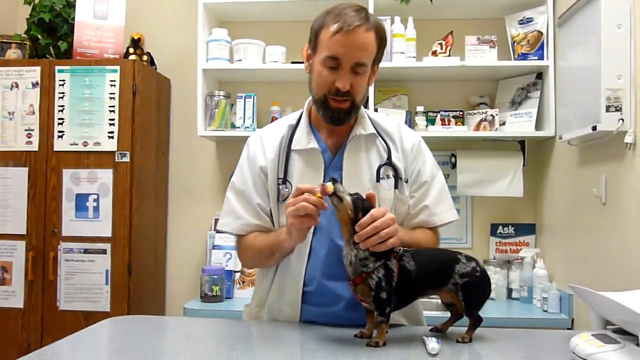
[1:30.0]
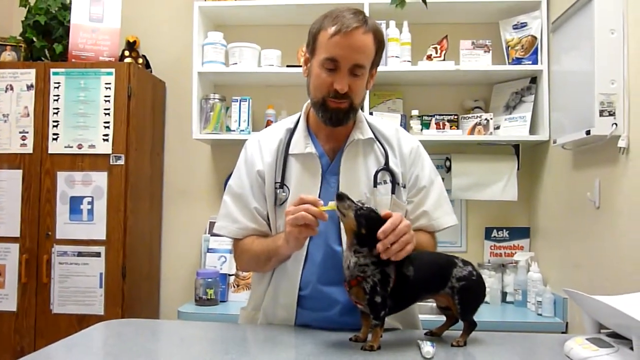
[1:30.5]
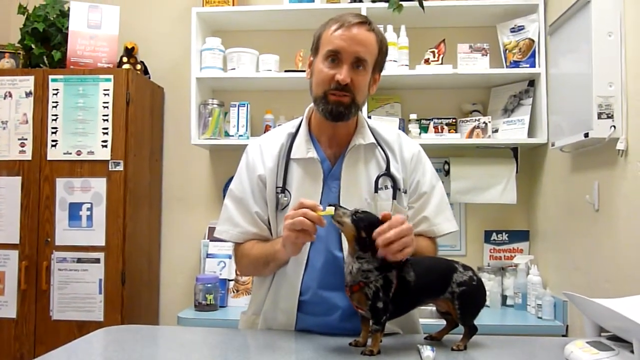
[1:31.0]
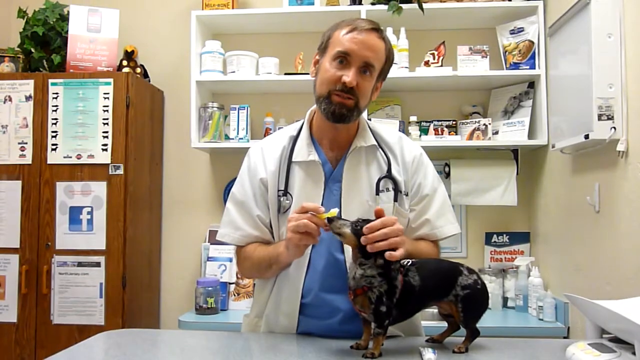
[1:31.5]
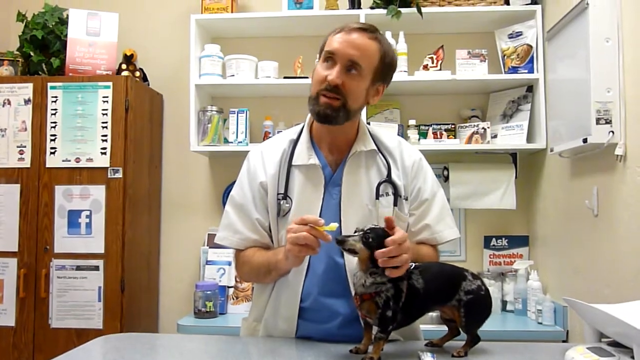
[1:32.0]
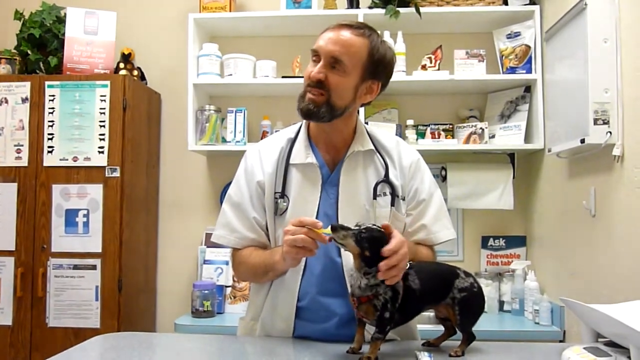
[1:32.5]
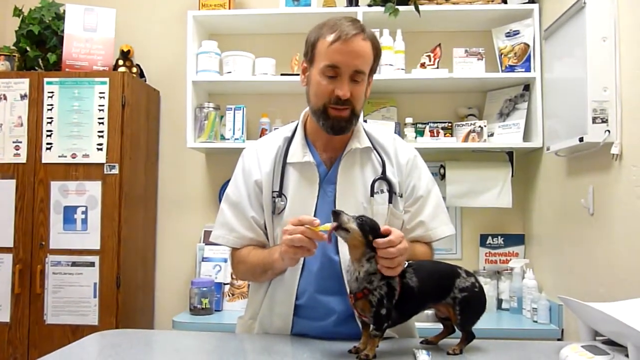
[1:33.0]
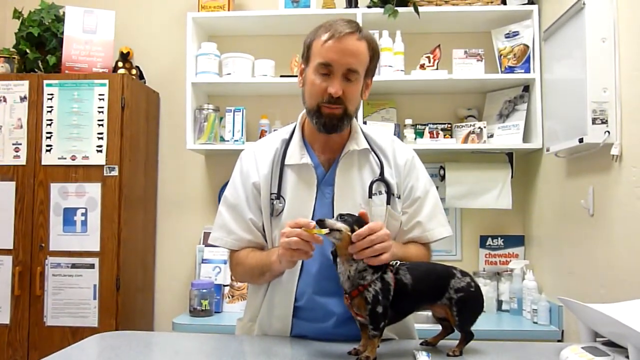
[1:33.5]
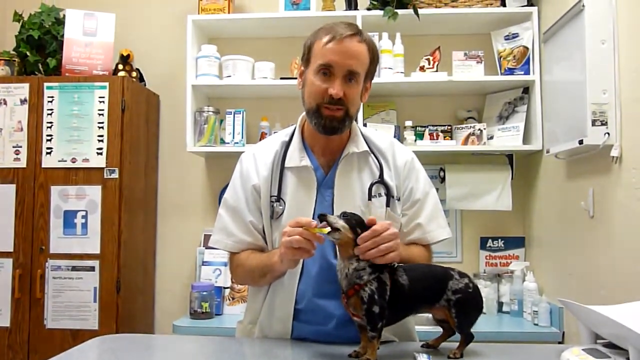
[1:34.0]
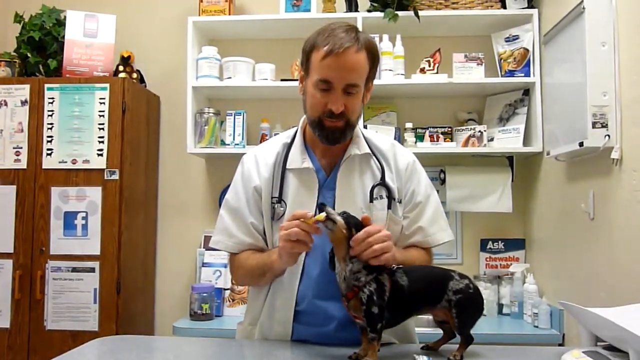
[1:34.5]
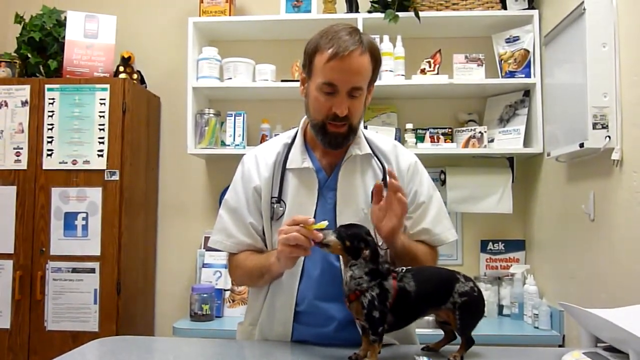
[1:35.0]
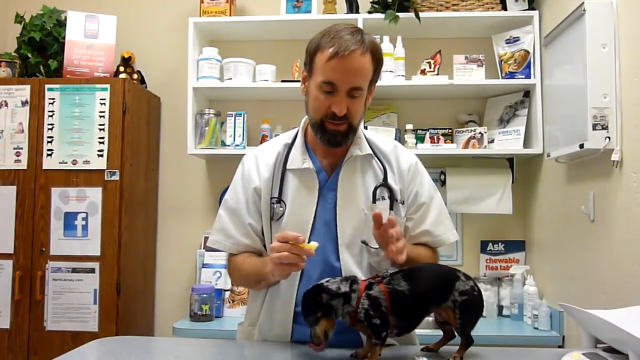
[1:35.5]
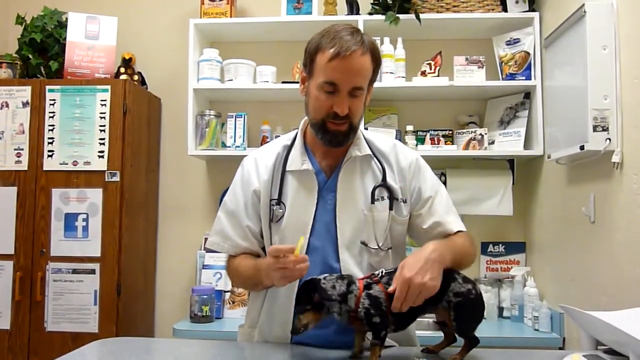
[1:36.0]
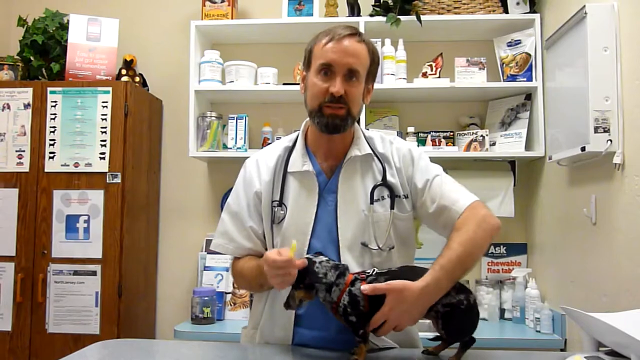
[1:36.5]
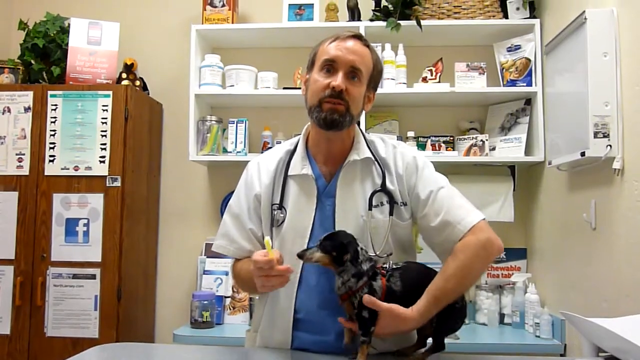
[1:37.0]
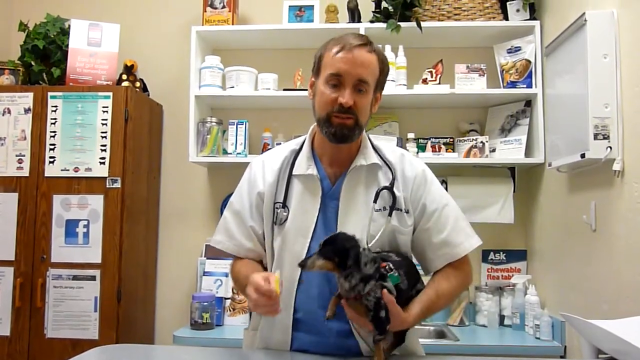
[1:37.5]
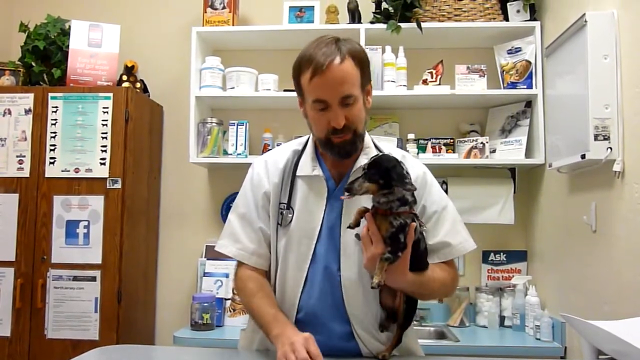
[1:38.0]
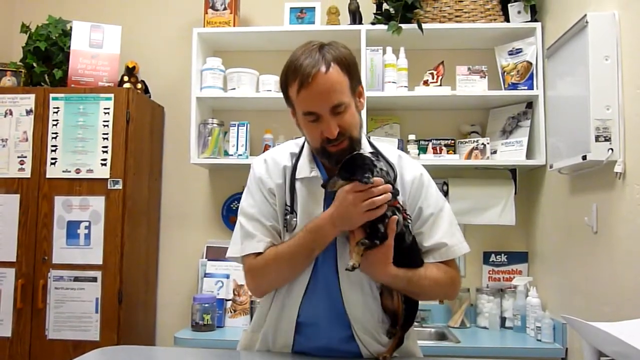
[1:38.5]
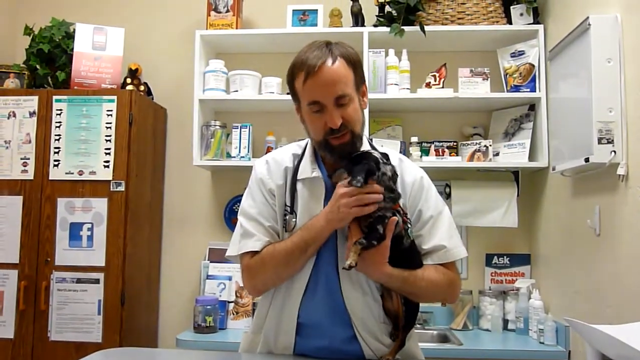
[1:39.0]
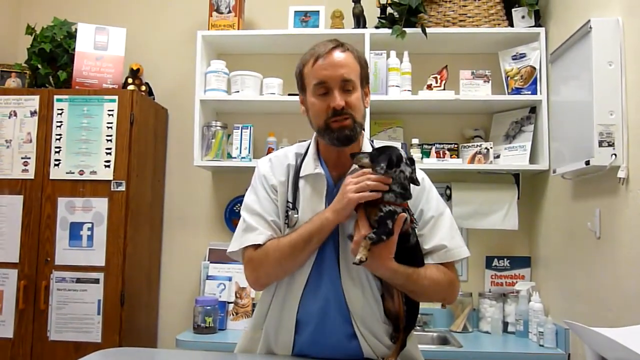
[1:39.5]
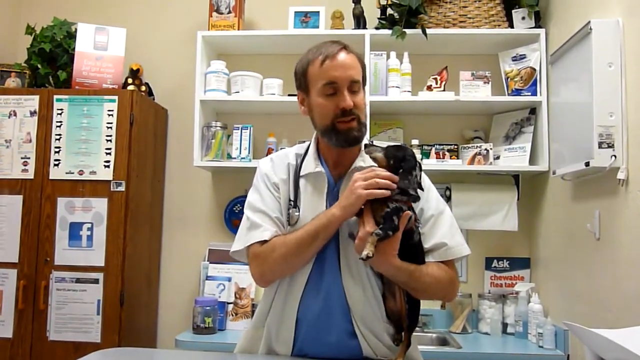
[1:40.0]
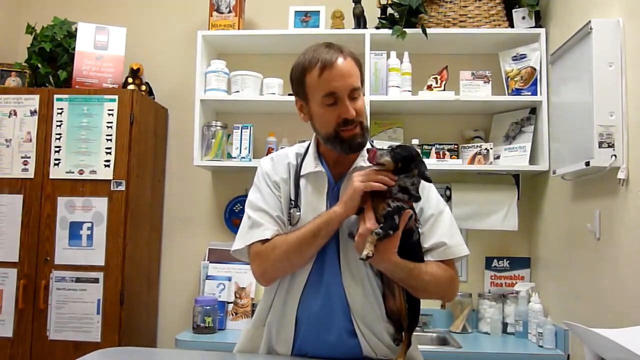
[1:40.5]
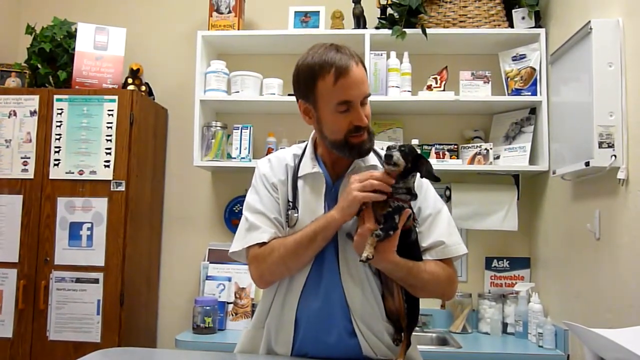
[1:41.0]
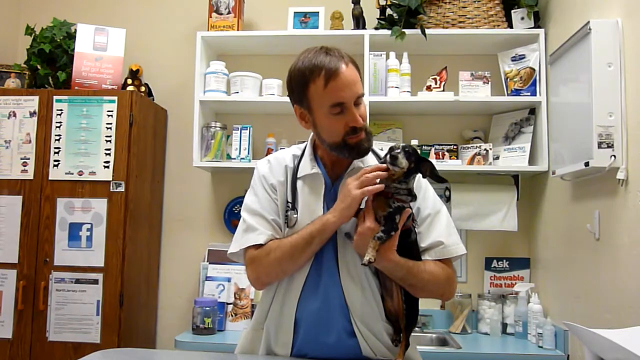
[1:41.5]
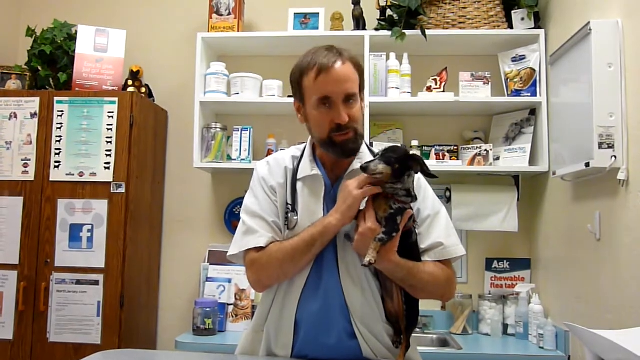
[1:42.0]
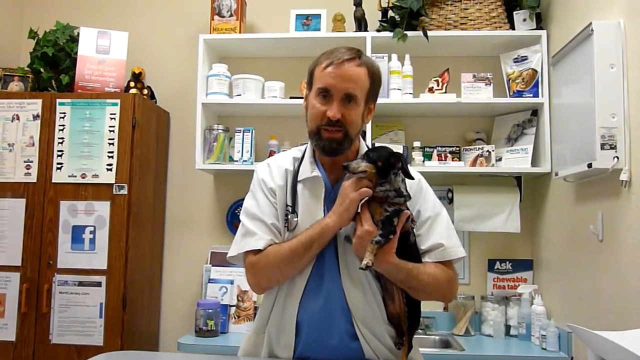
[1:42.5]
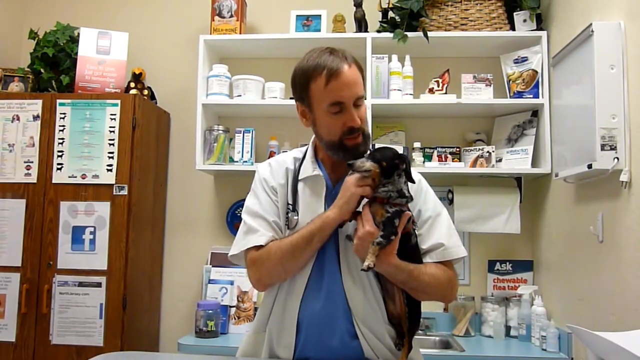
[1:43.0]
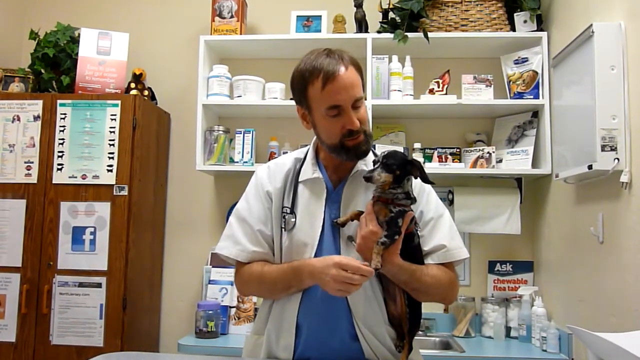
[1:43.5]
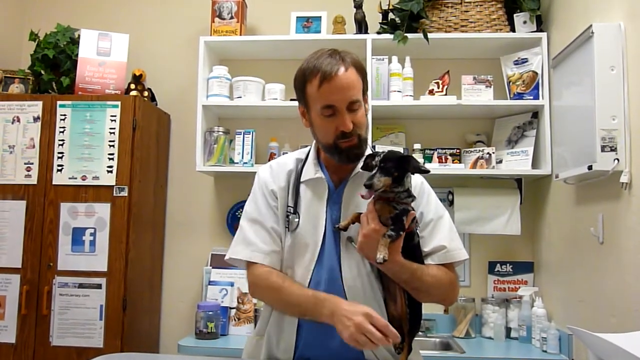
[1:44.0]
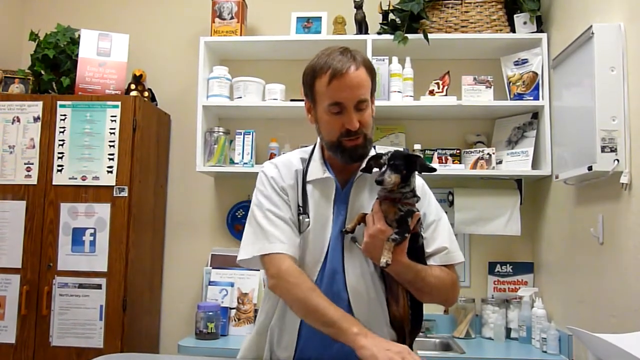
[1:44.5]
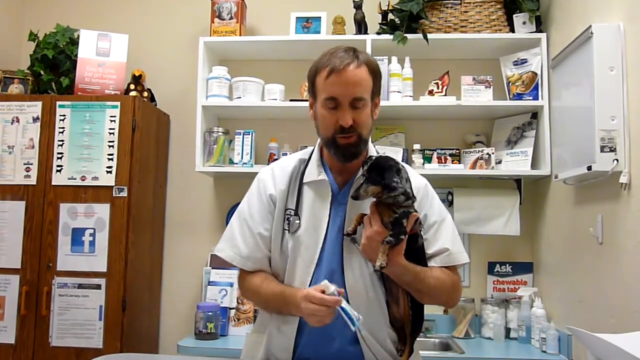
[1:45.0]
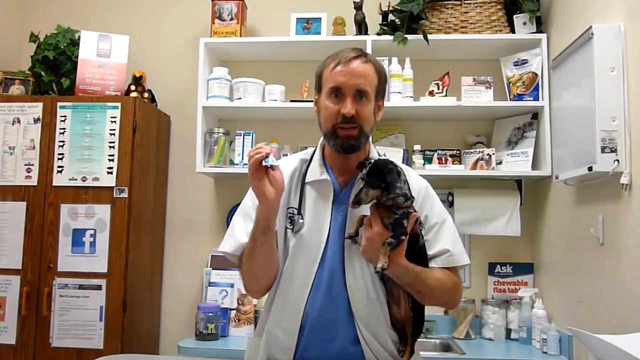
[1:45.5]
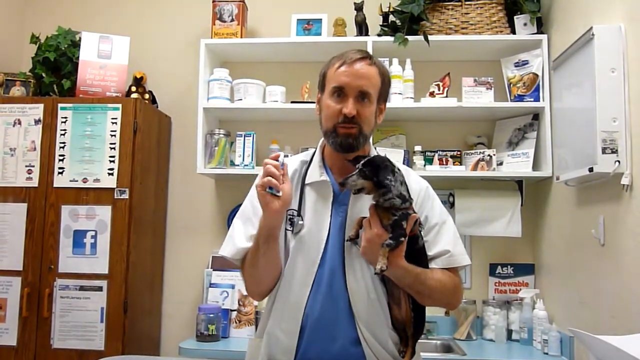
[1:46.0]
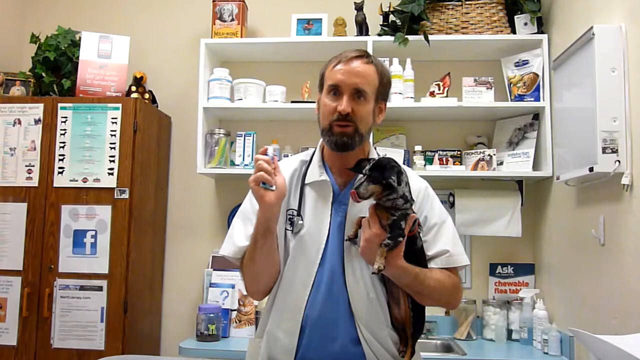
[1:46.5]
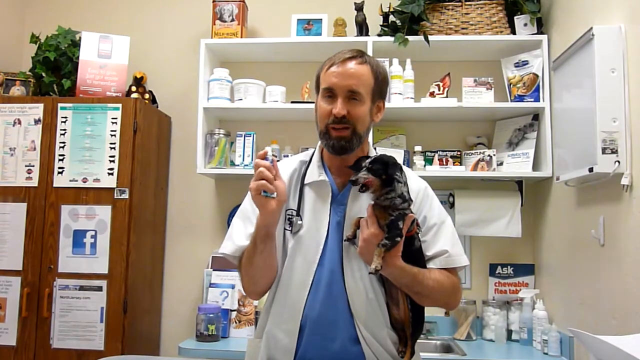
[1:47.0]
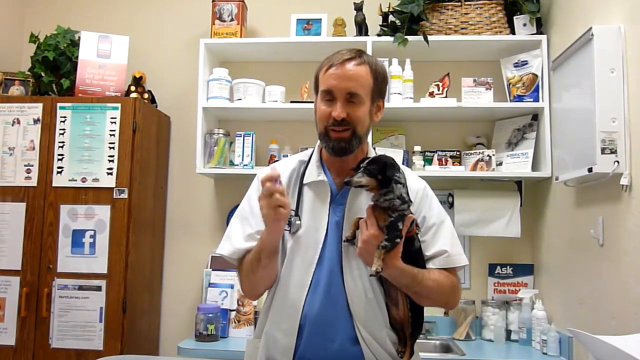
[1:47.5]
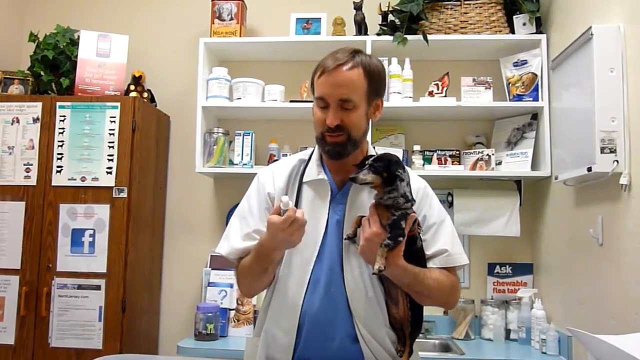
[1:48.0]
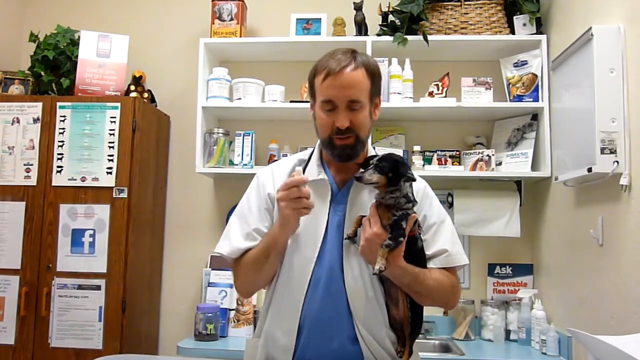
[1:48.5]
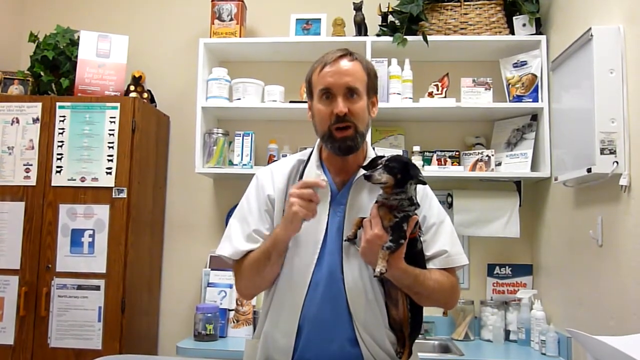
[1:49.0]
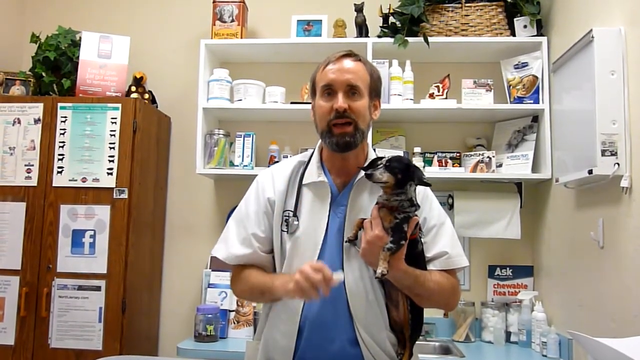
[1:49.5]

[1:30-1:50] The vet is apparently giving a tutorial on brushing a dog's teeth. He rubs the top of the dog's head as the dog reaches forward with his snout and mouth to keep licking the toothbrush. The vet then picks the dog up completely, grabbing him under his front paws with his left hand, and uses his right hand to pet the dog's chest and neck. Talking, he holds the toothbrush in the air and shows the toothpaste he used. It appears the vet has finished brushing and is giving an explanation.